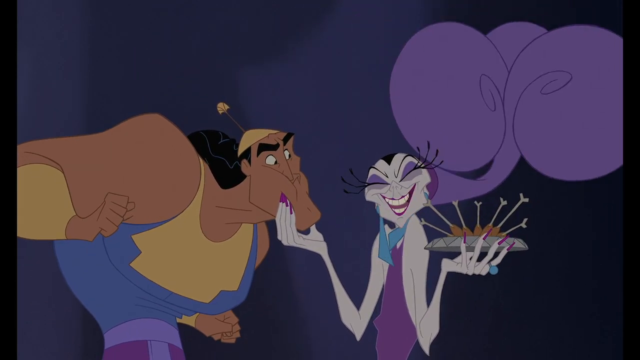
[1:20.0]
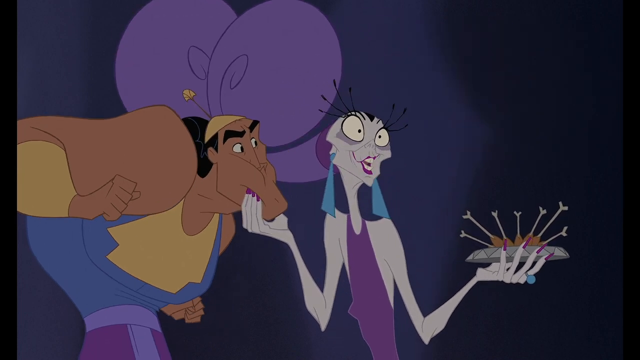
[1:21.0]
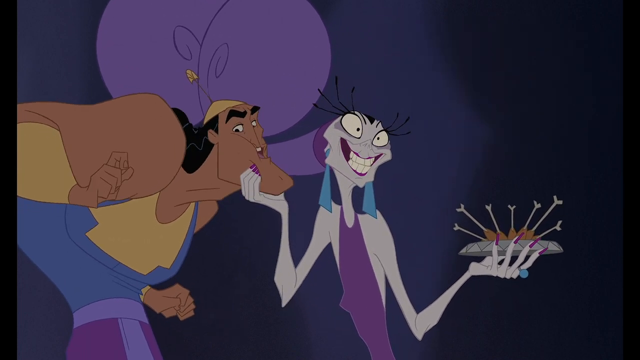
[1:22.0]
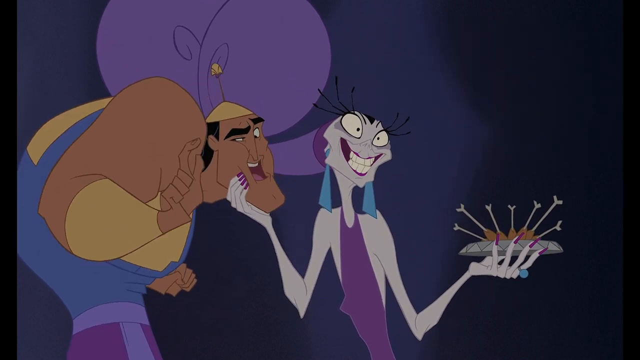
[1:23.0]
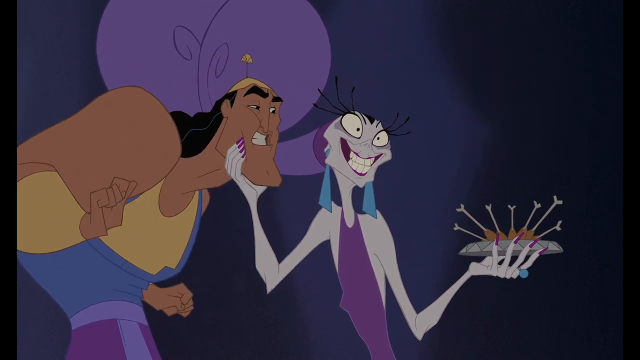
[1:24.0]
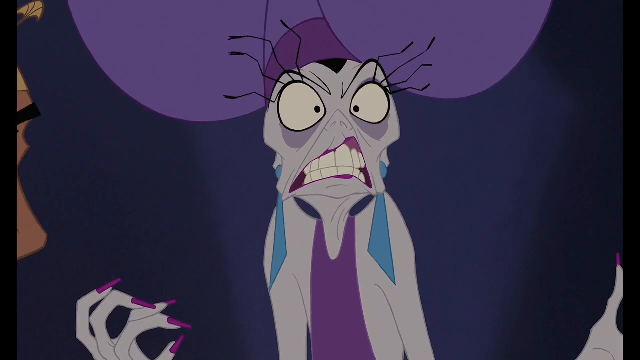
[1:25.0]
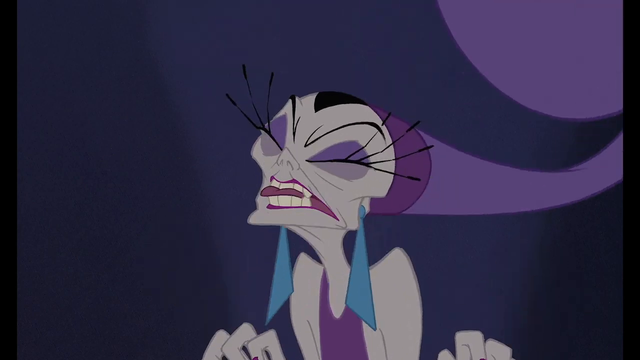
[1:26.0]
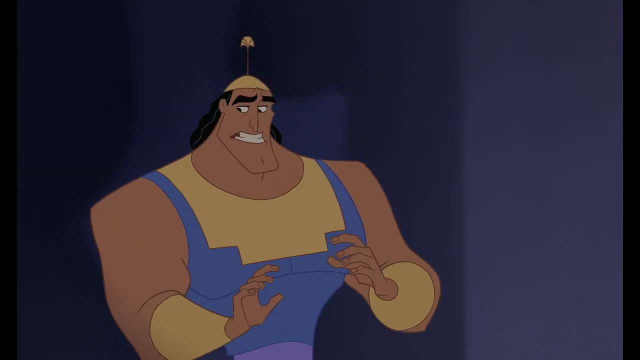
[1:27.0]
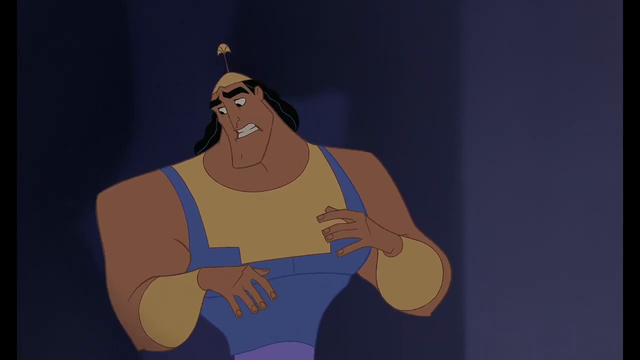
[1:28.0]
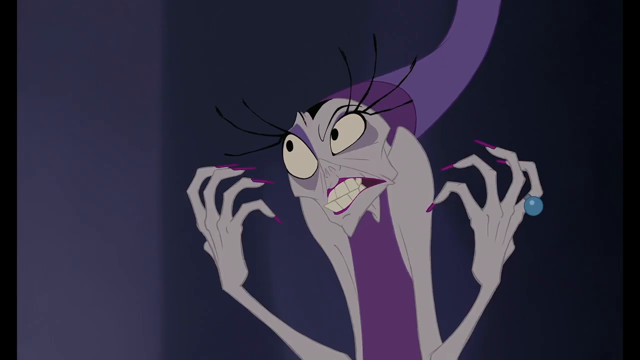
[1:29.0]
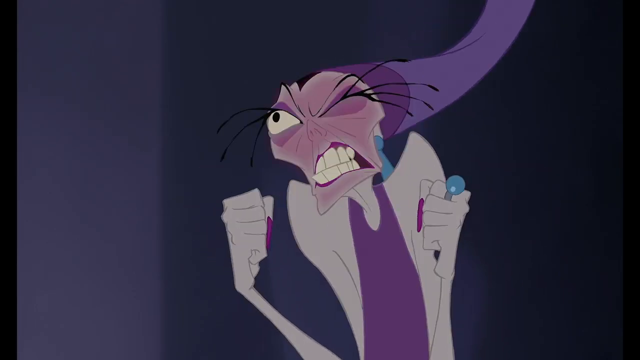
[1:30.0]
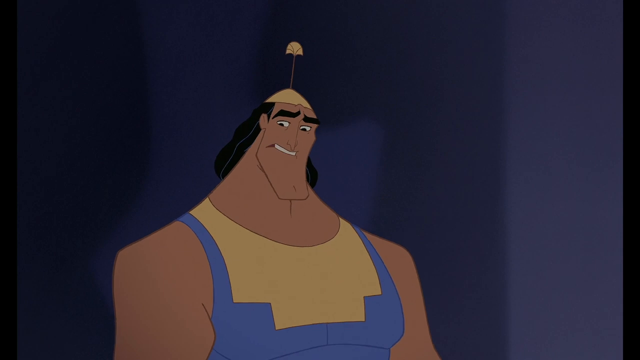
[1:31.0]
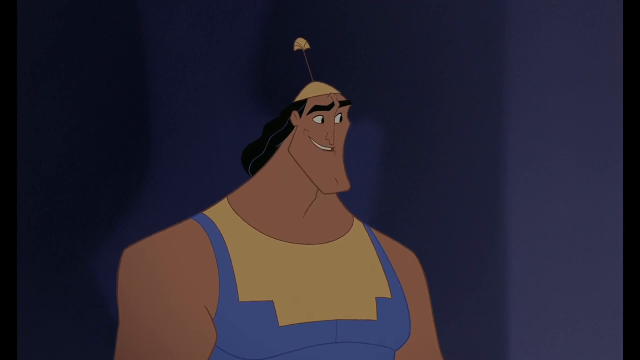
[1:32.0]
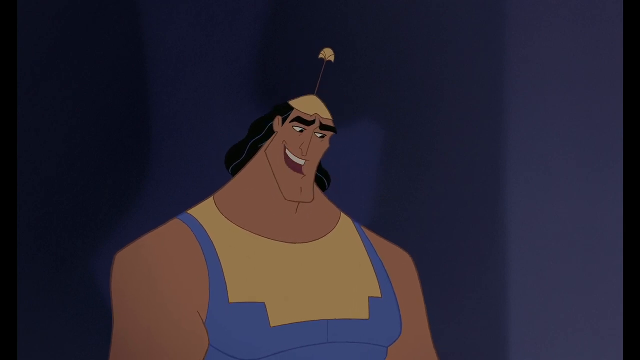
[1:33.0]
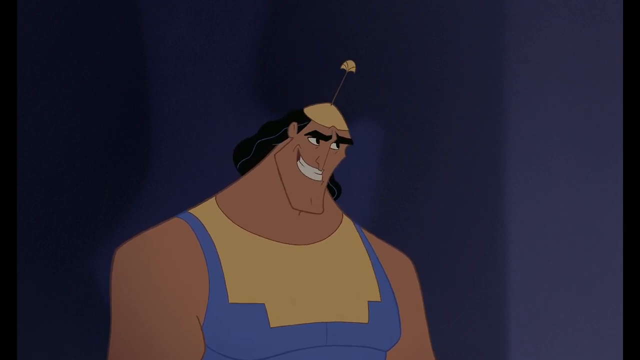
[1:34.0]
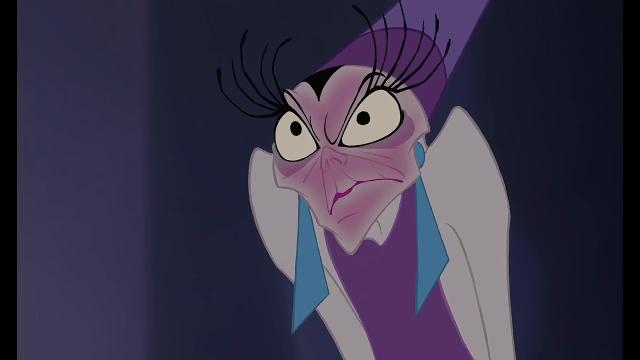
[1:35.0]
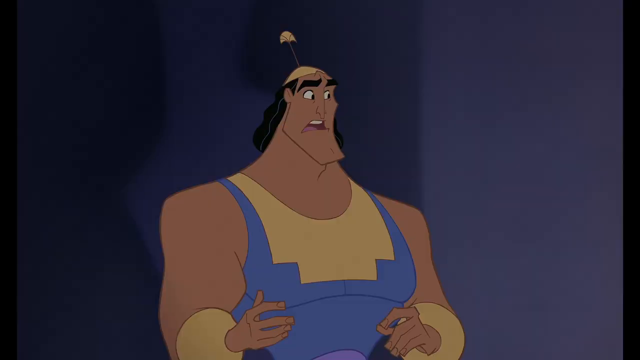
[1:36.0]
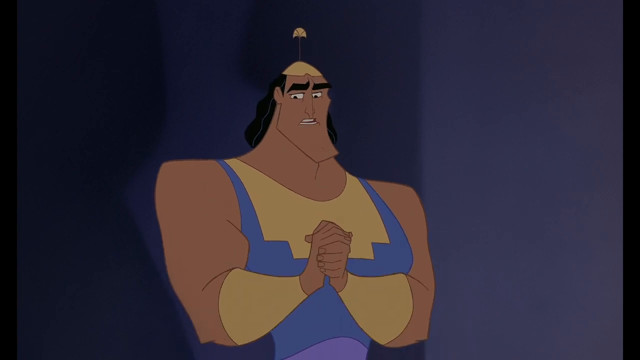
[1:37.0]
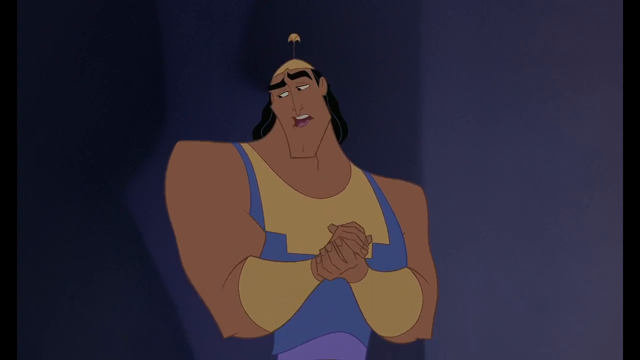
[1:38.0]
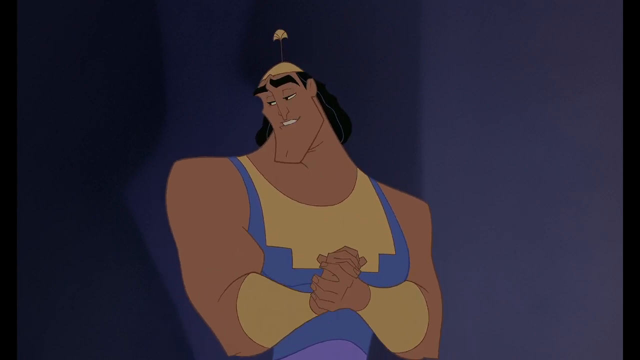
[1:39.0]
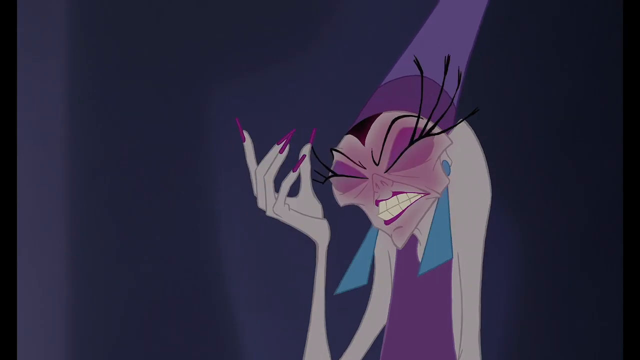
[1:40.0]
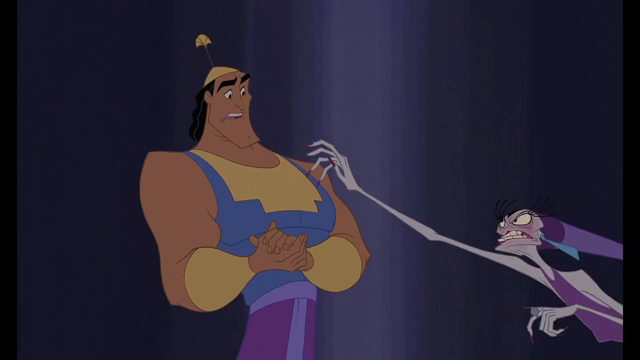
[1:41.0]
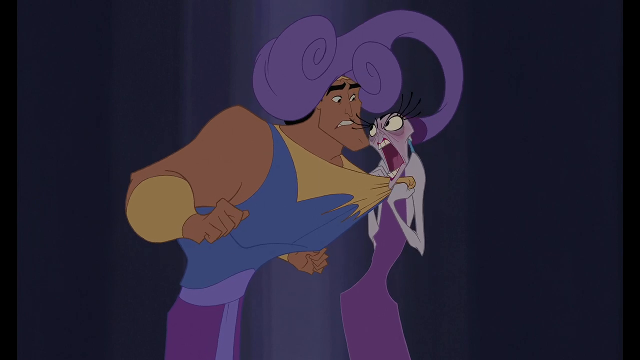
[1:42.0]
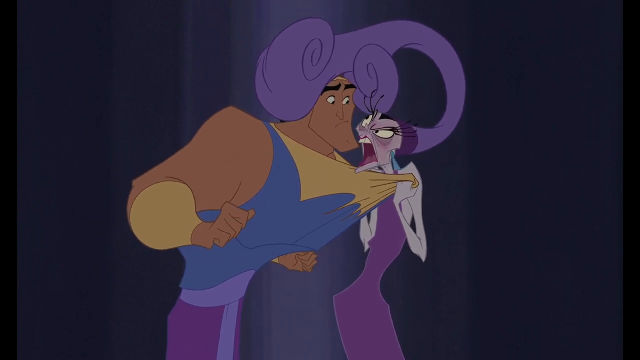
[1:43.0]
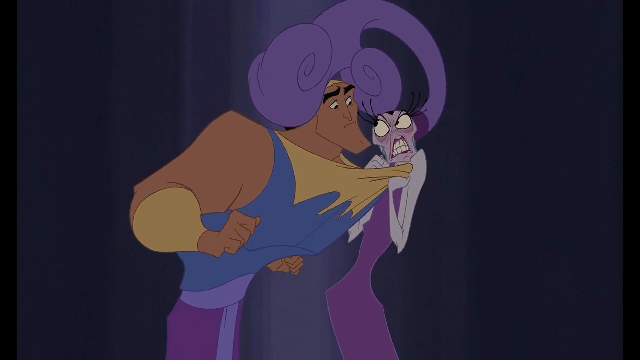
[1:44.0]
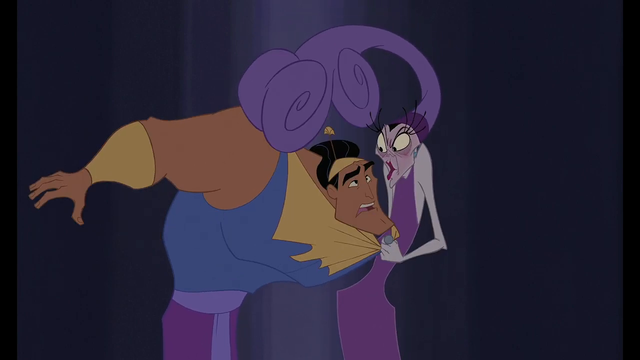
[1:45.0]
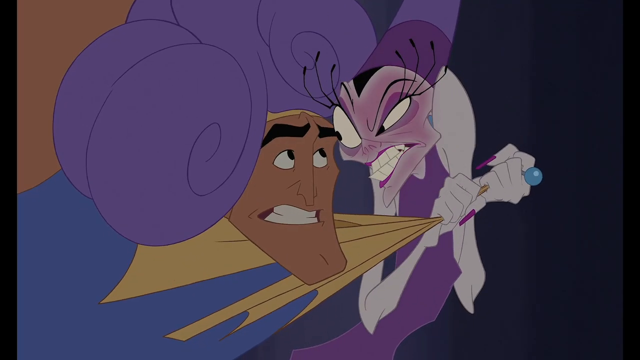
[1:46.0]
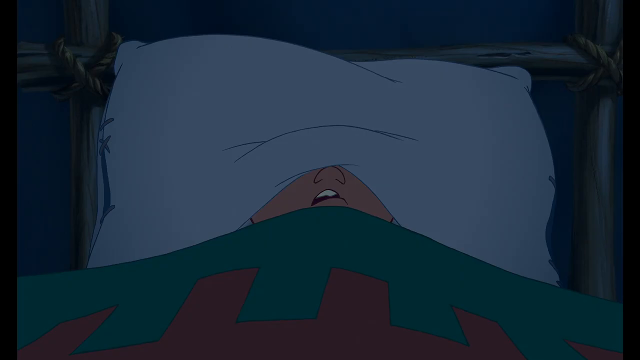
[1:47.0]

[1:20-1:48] A skinny old lady with purple hair, a purple dress and large green earrings holds a plate full of food in her right hand; she has a large ring on her finger and large purple fingernails. With her other hand she squeezes the face of her servant warrior, and she tells him that if he doesn't do right, he won't be safe anywhere. When he tells her he just wants to go, she cringes and tells him there is no way he can leave her. His face turns red, and he says, "Surely you would let me go." She gets very angry. A young figure, maybe three or four years old, has a black topknot wrapped in a purple band.